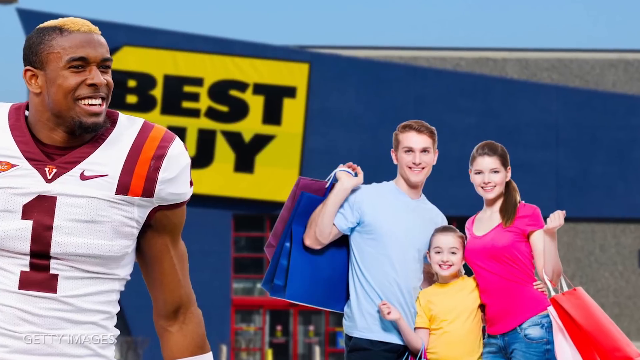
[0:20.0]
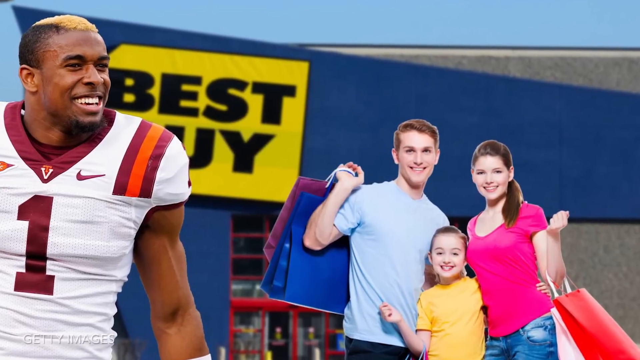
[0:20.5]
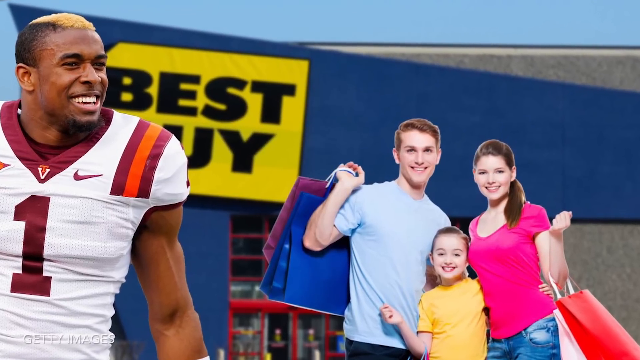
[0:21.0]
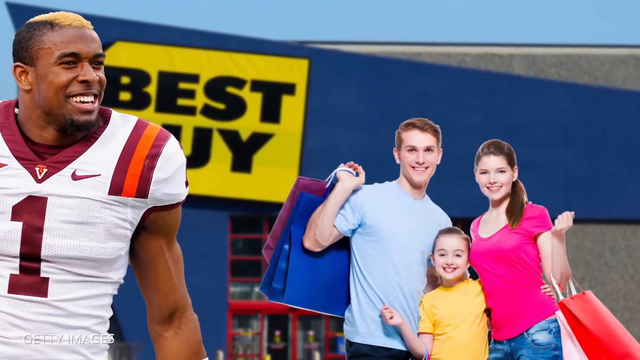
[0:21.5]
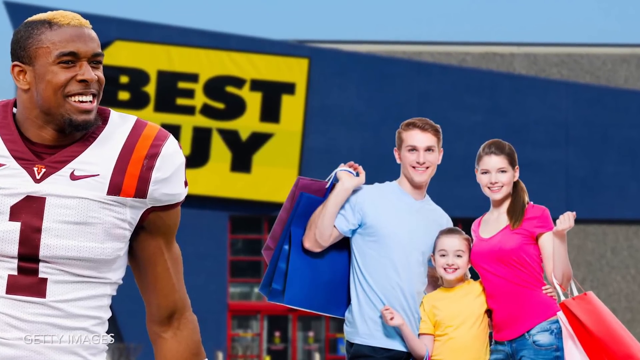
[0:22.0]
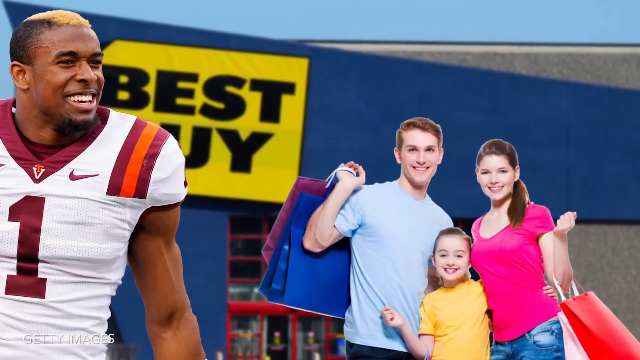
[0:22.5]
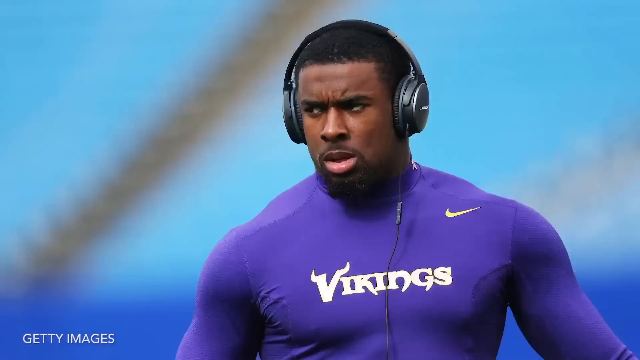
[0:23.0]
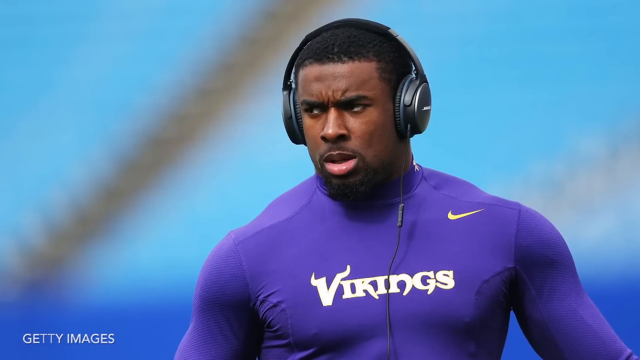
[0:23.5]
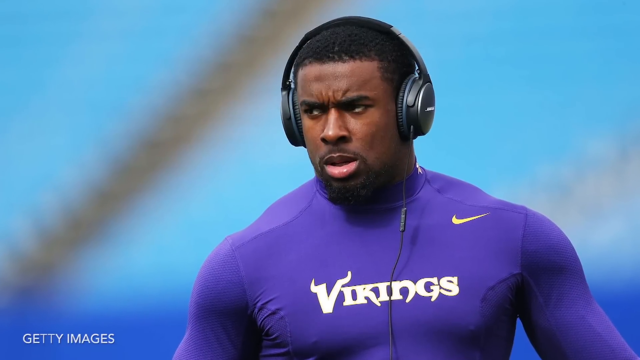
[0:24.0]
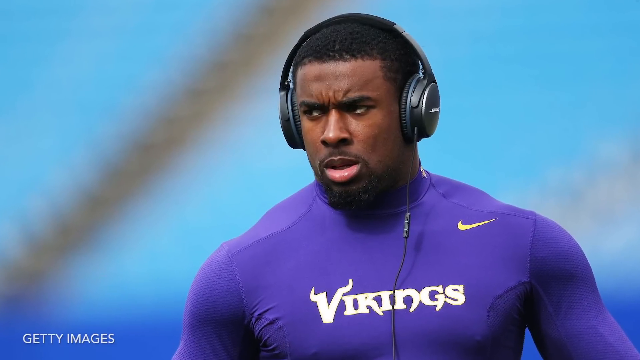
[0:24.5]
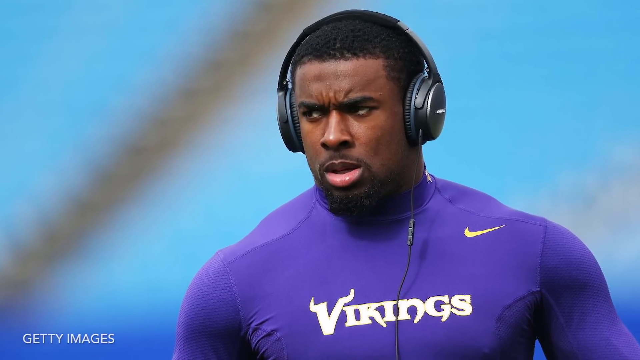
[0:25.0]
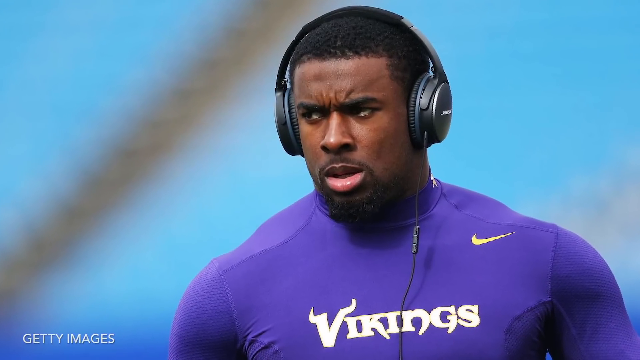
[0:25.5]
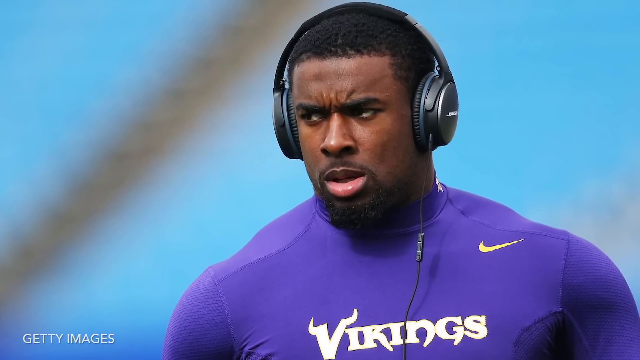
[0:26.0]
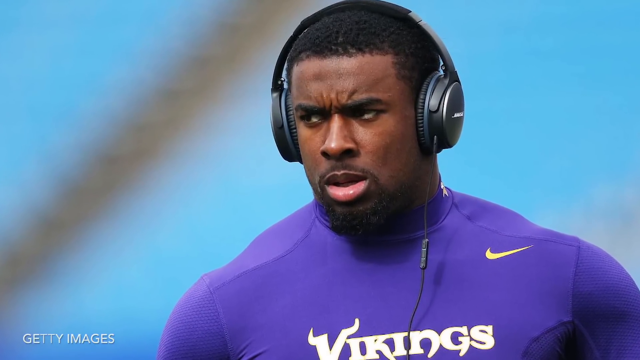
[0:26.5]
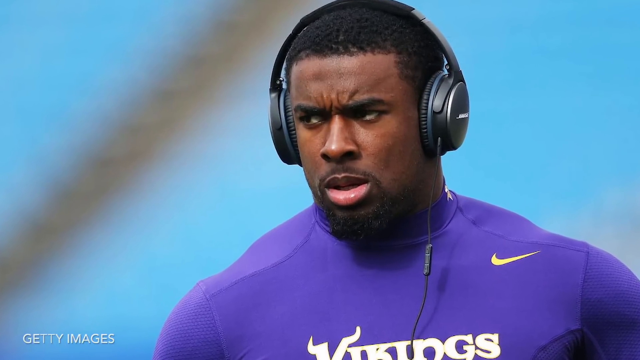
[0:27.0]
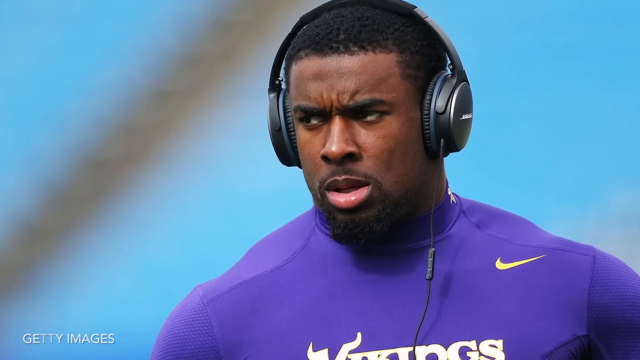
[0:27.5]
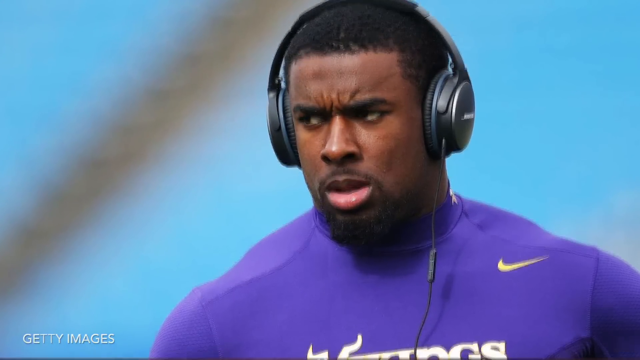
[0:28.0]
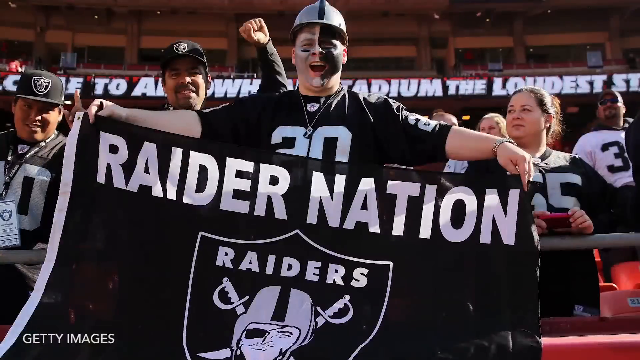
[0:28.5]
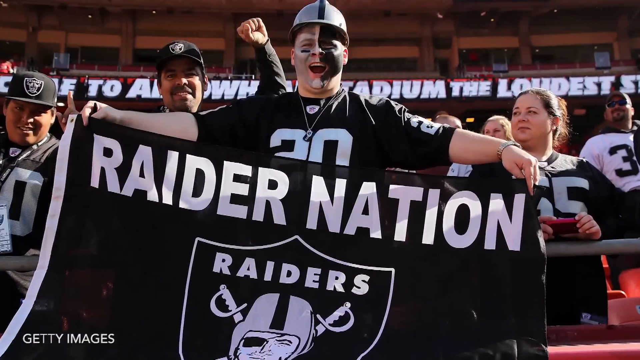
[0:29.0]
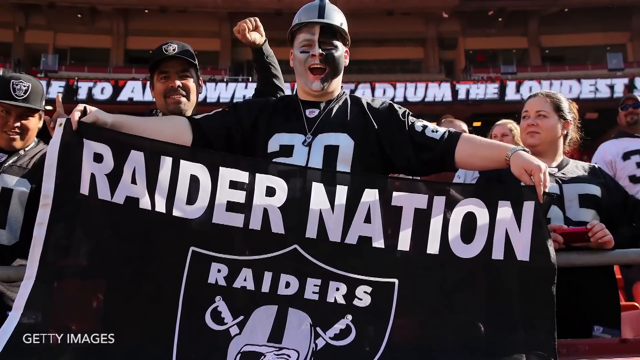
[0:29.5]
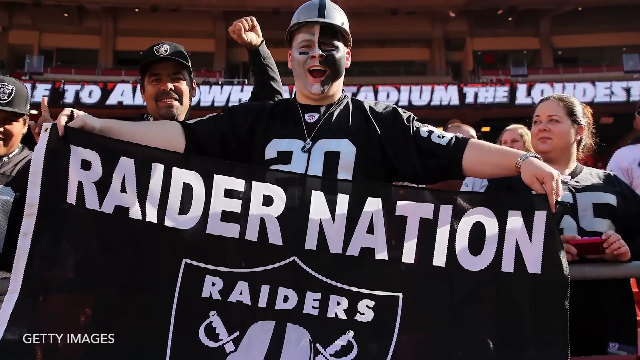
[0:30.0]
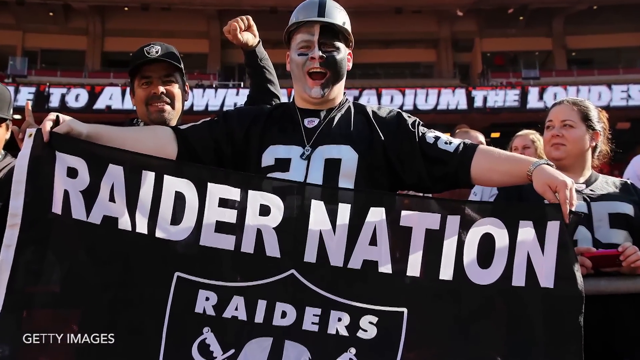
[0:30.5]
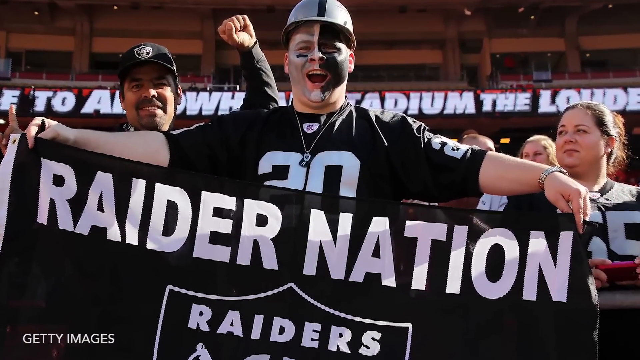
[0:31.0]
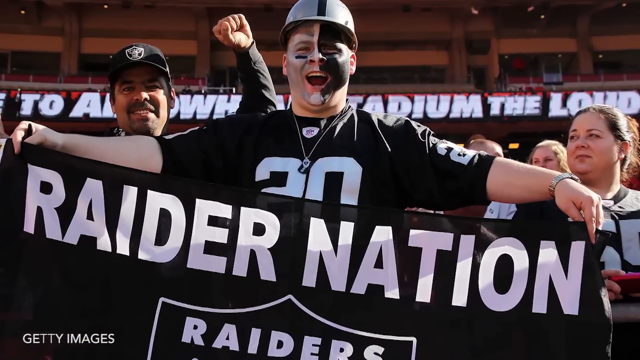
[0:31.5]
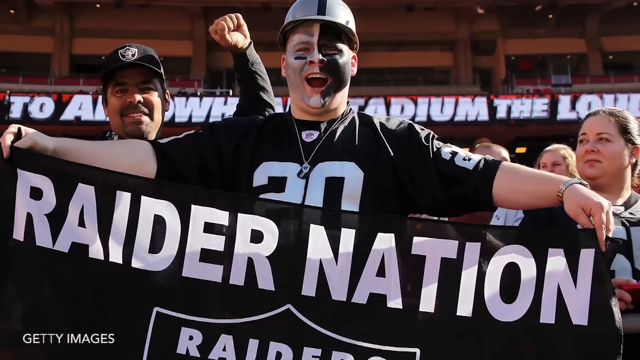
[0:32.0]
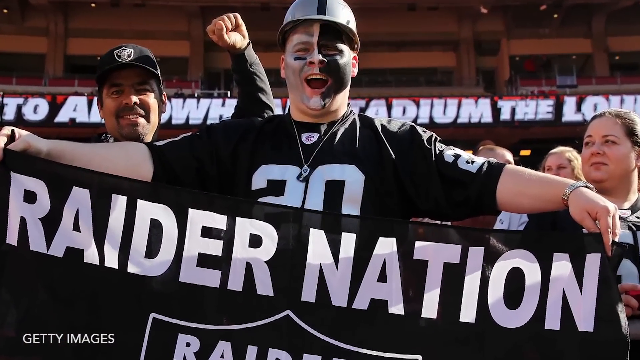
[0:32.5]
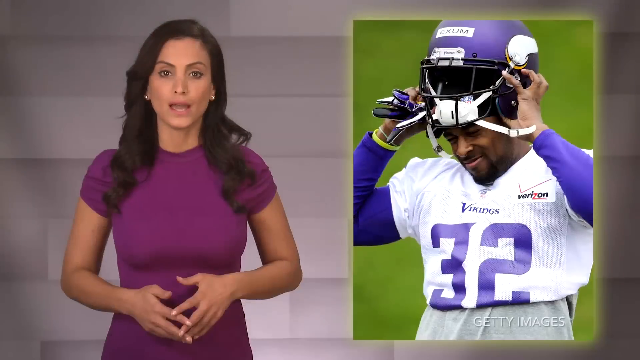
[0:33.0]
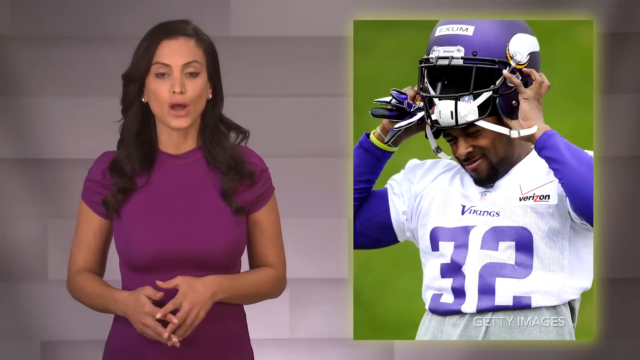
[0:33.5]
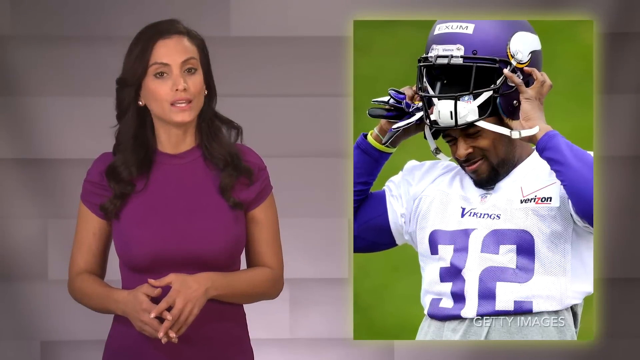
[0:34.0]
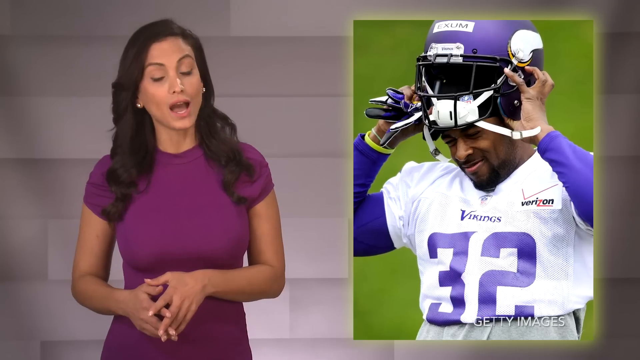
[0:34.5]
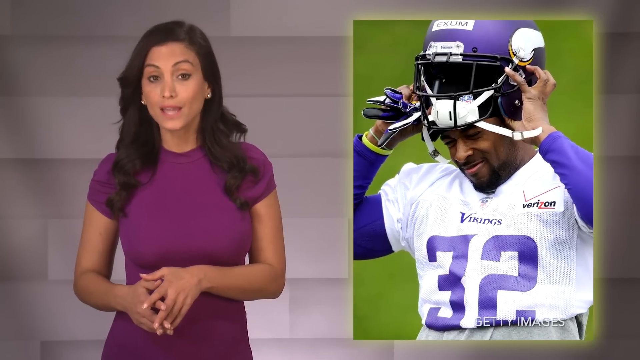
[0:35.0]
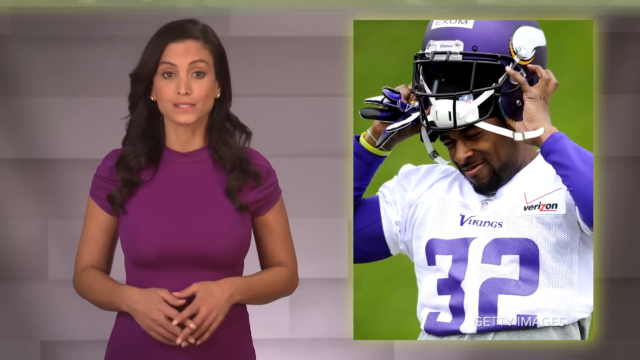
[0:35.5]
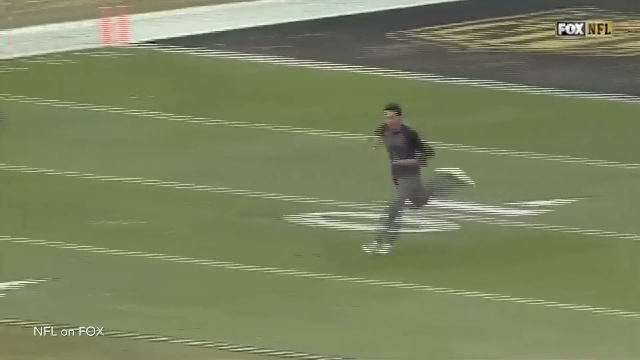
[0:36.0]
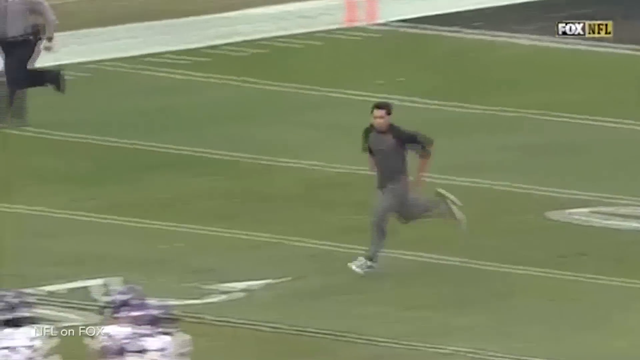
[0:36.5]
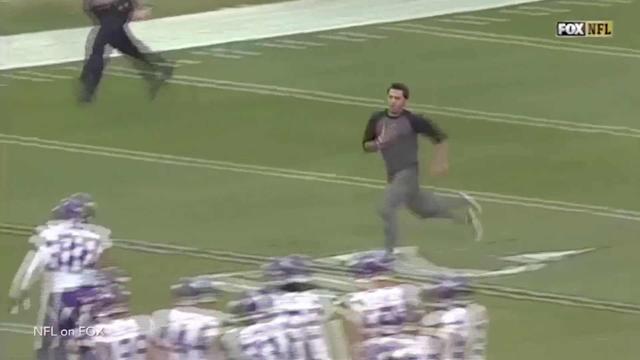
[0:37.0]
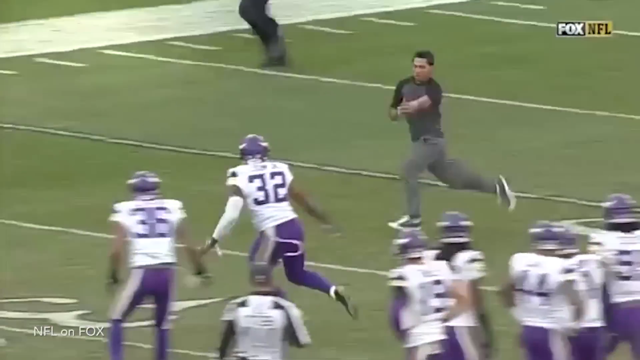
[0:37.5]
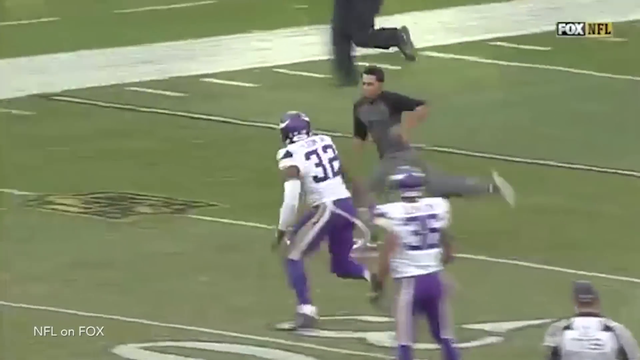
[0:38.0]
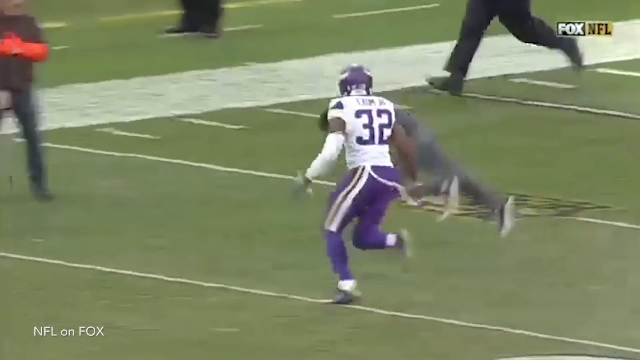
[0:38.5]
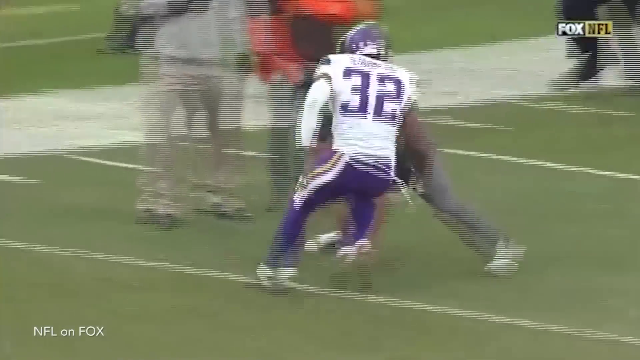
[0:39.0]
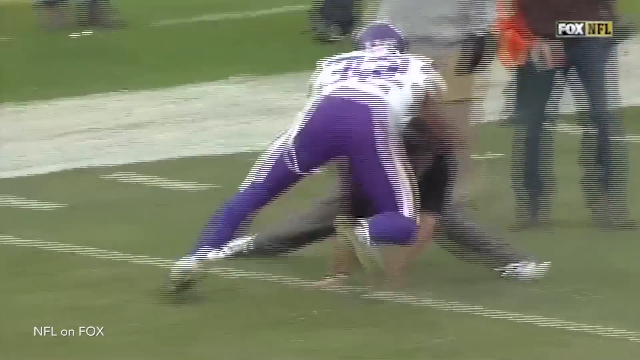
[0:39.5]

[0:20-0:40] A Caucasian family, a man, a woman and a girl, stand in front of a Best Buy store holding shopping bags of various colors. On the left of the image, a football player looks toward the family, smiling. He is African American with bleach-blonde hair, wearing a white jersey with a maroon number one, orange and maroon stripes, and white pants. The scene cuts to a very muscular African-American man in a tight purple shirt that says "Vikings," wearing headphones, with a furrowed brow, as the image zooms in toward his face. Next is a picture of a group of fans: the fan in the center, whose face is painted black and white, holds up a flag that says "Raider Nation," and a few people around him wear black and white Raiders jerseys. They seem to be in a stadium, with advertisements scrolling by in the background. The split screen with the news reporter appears again, and she is talking about a player.